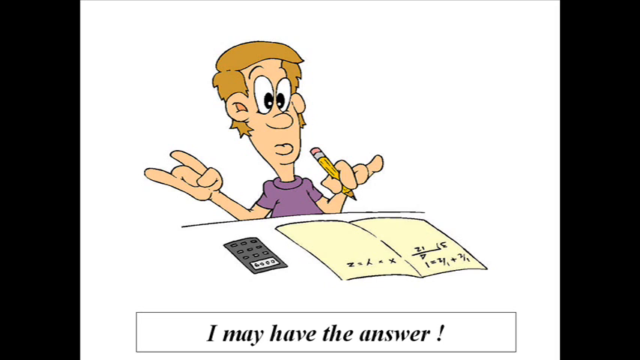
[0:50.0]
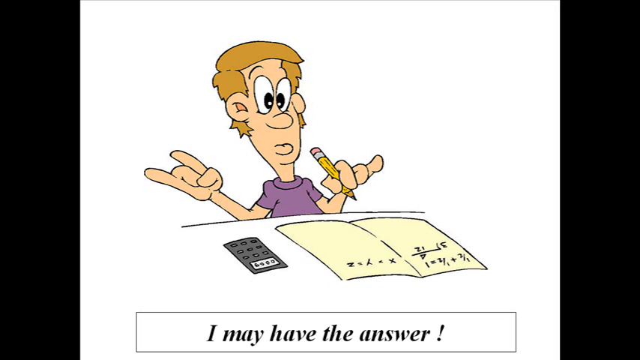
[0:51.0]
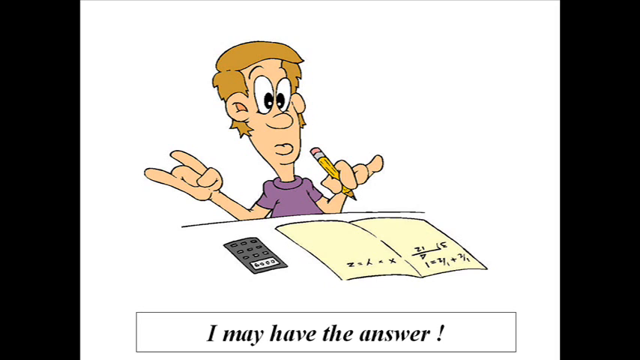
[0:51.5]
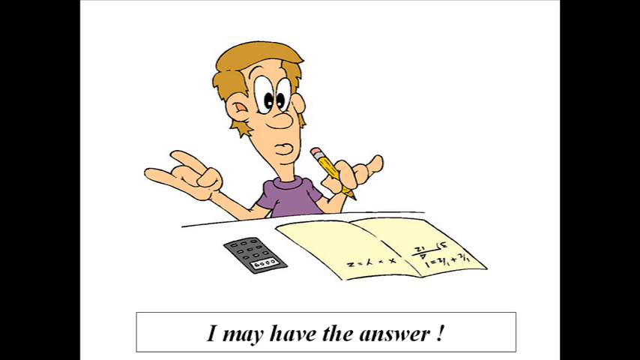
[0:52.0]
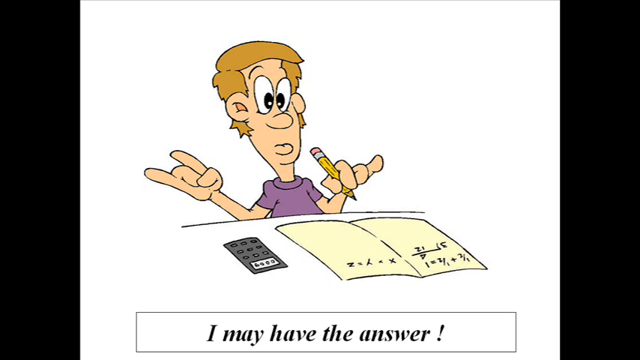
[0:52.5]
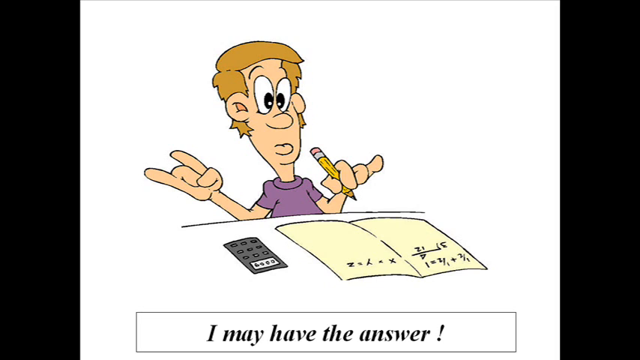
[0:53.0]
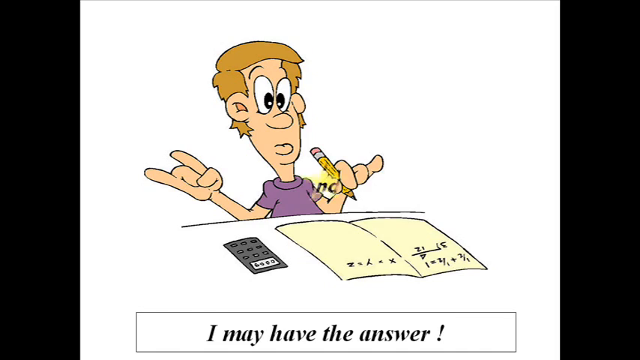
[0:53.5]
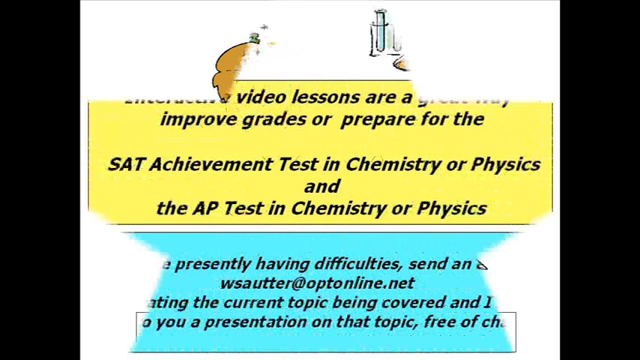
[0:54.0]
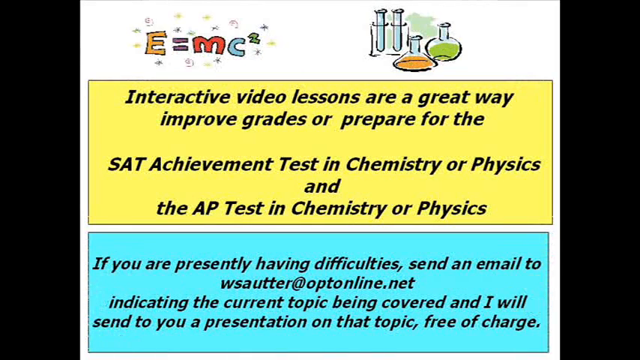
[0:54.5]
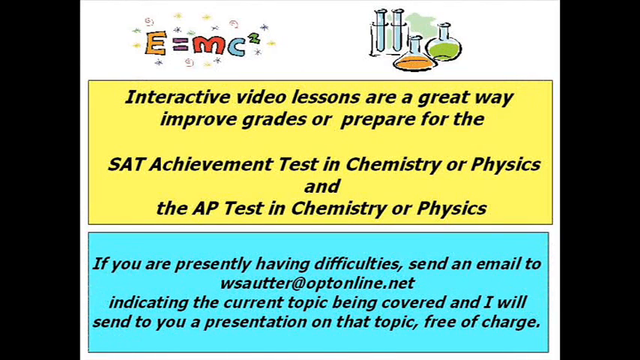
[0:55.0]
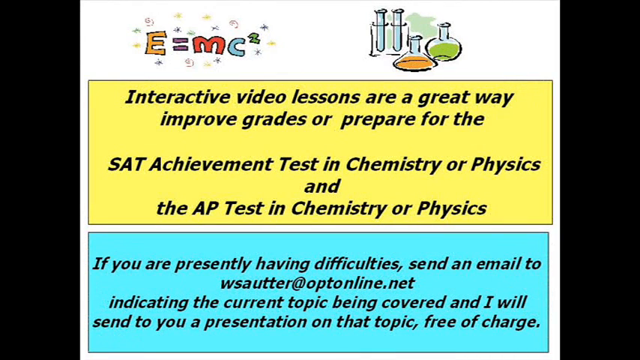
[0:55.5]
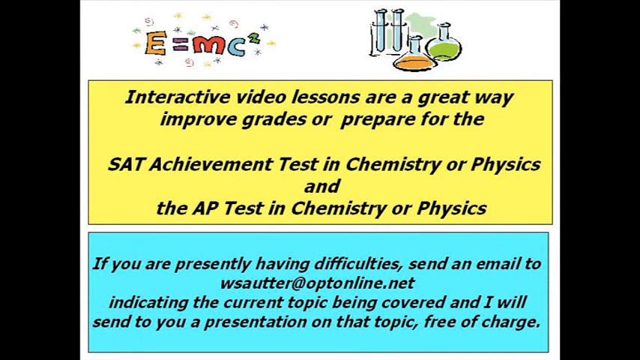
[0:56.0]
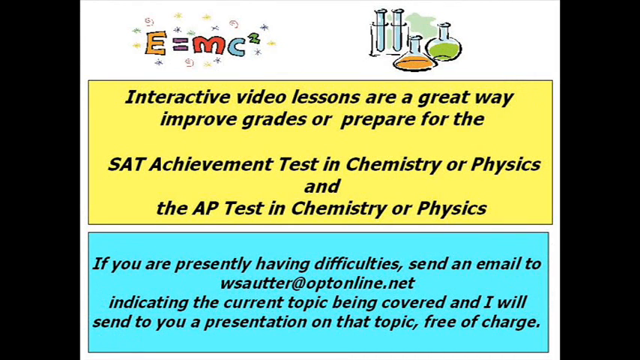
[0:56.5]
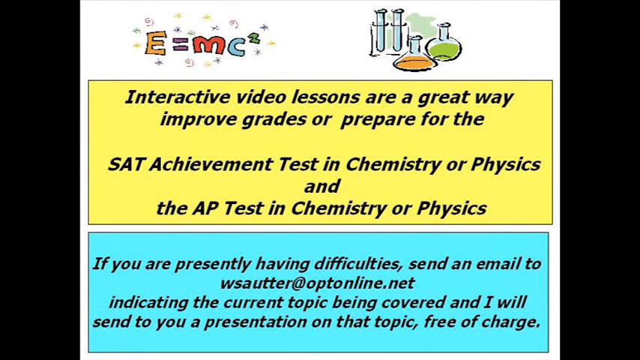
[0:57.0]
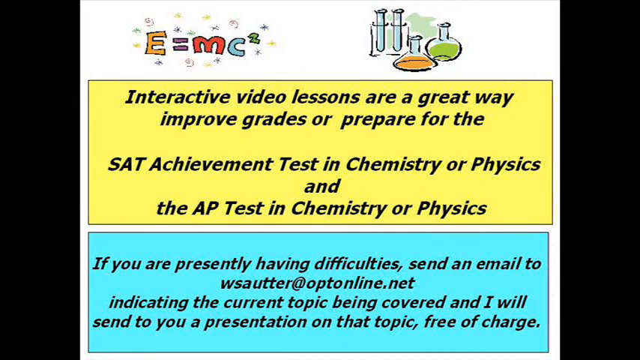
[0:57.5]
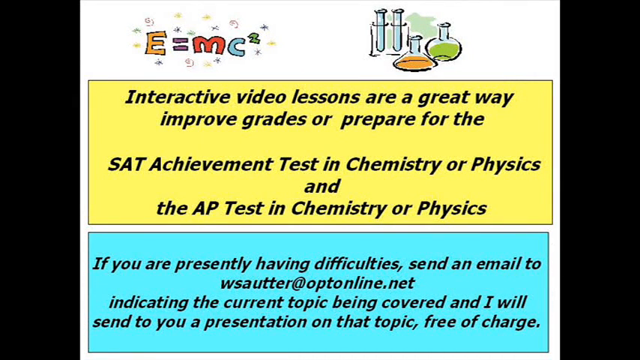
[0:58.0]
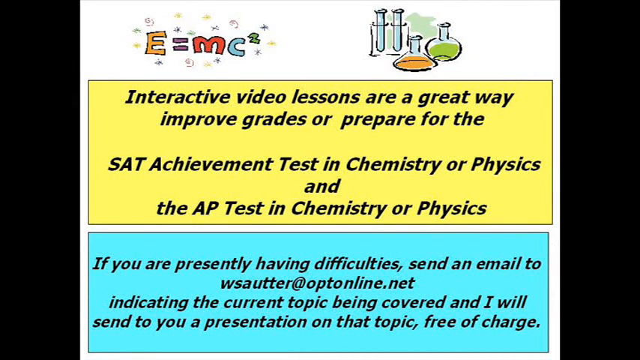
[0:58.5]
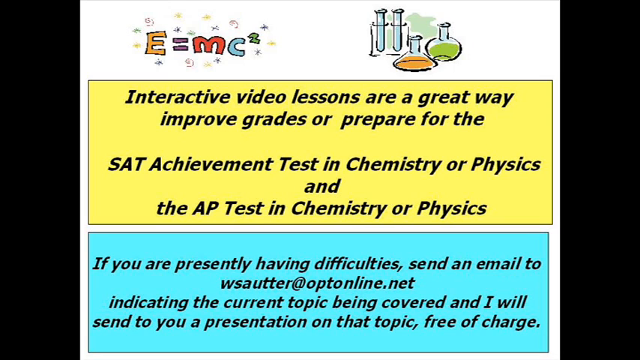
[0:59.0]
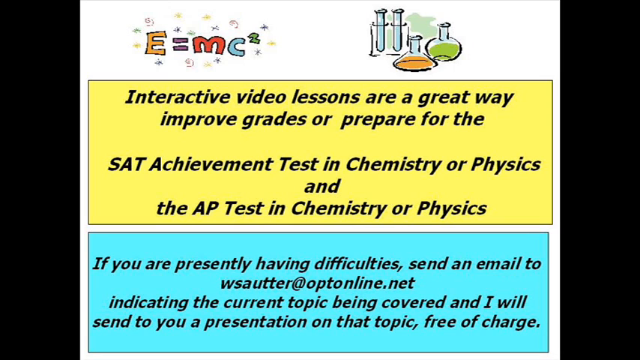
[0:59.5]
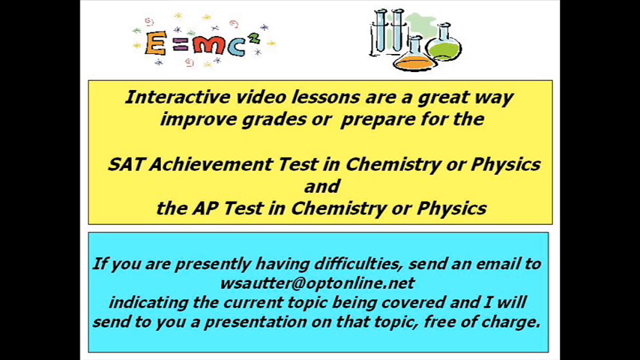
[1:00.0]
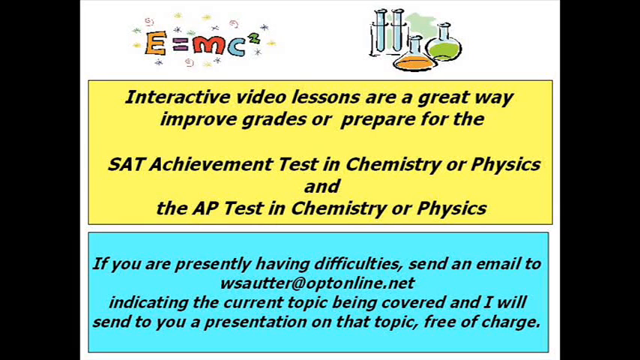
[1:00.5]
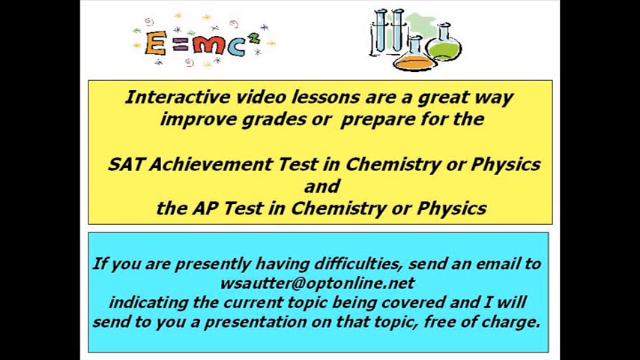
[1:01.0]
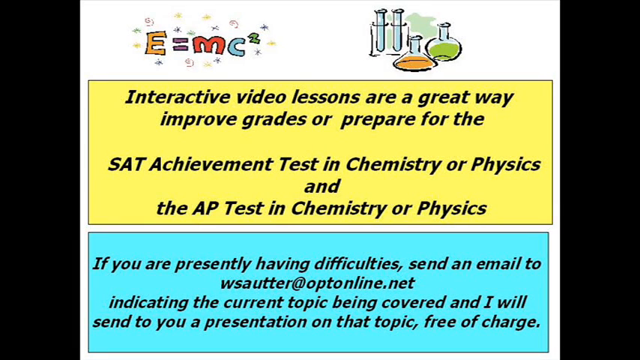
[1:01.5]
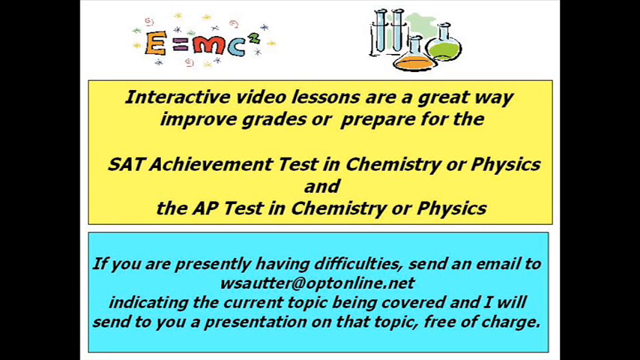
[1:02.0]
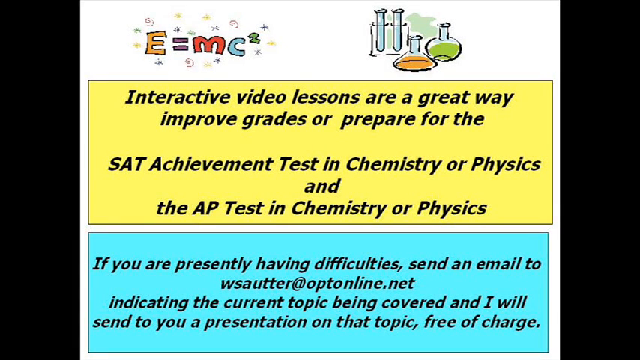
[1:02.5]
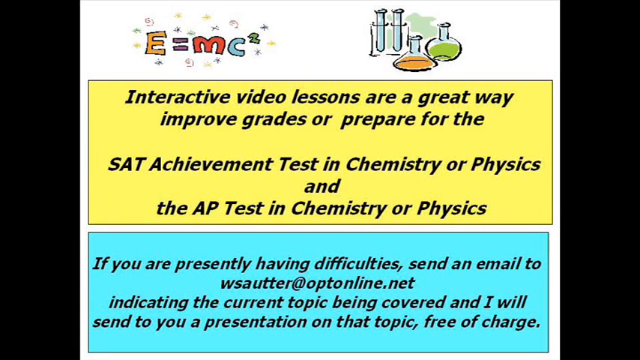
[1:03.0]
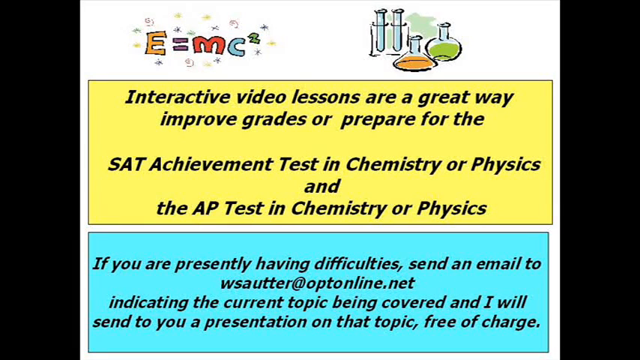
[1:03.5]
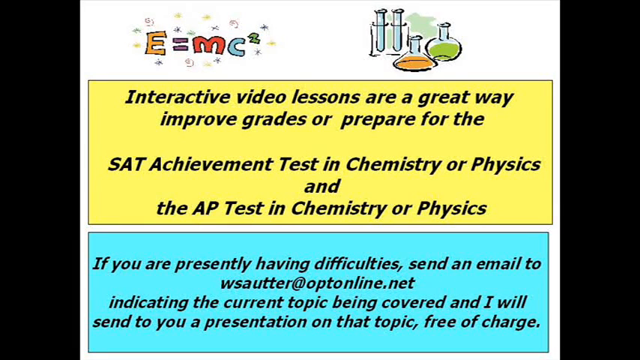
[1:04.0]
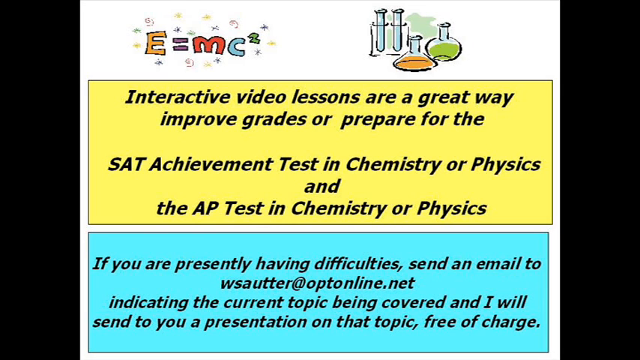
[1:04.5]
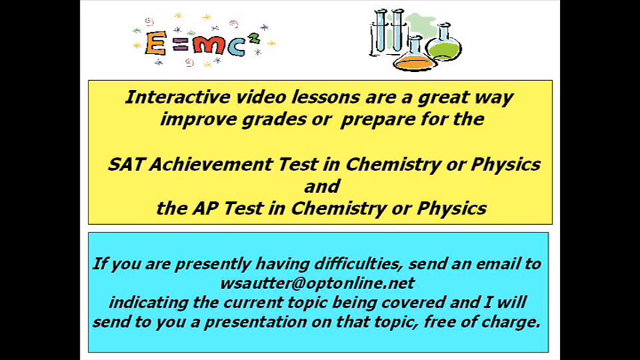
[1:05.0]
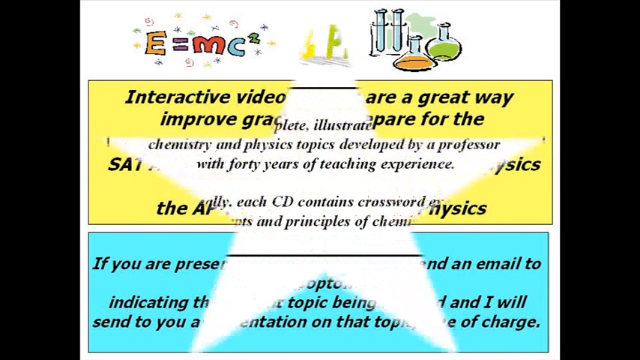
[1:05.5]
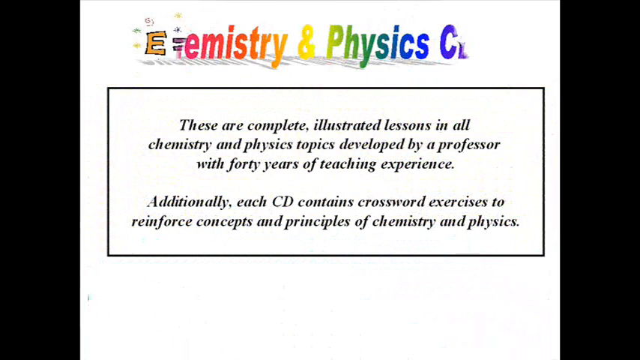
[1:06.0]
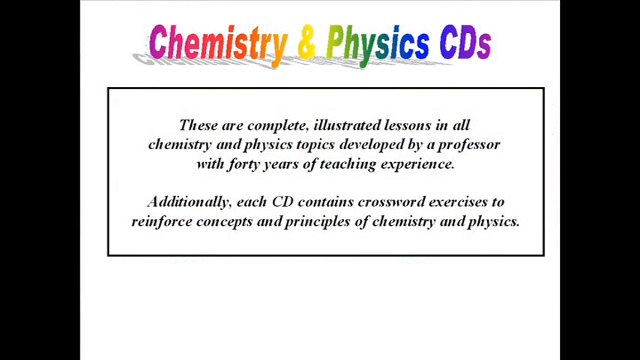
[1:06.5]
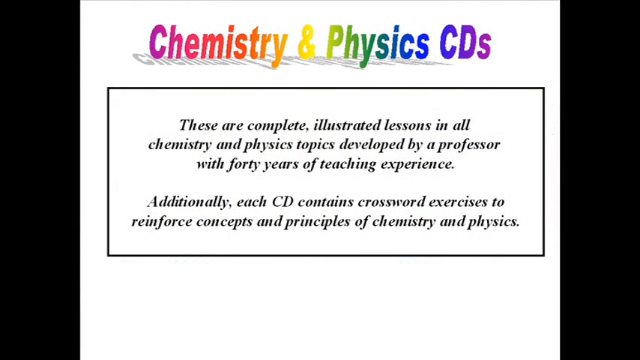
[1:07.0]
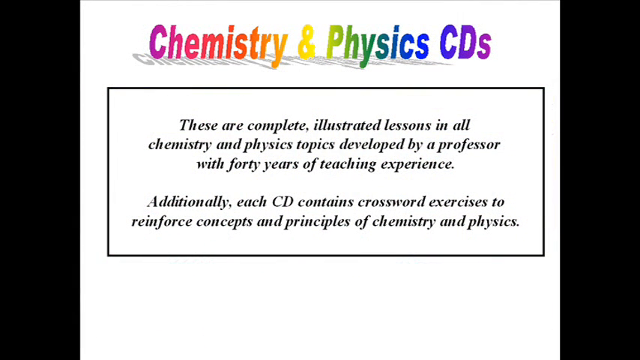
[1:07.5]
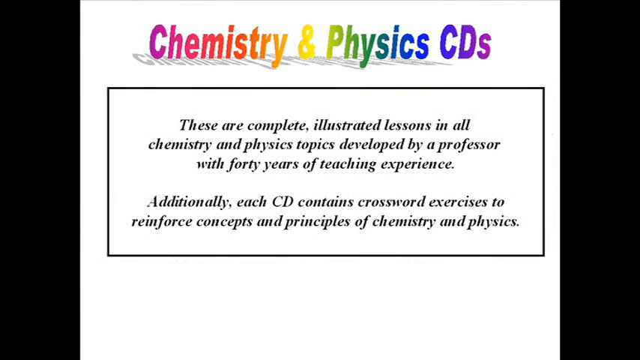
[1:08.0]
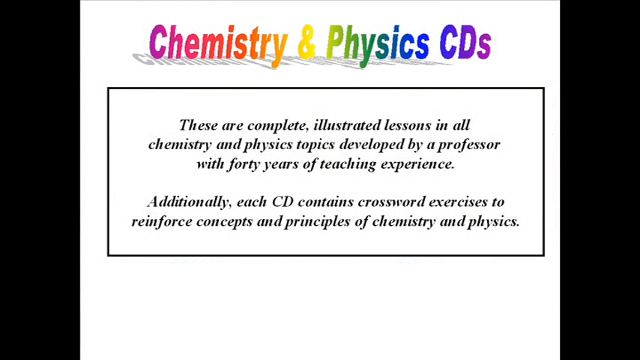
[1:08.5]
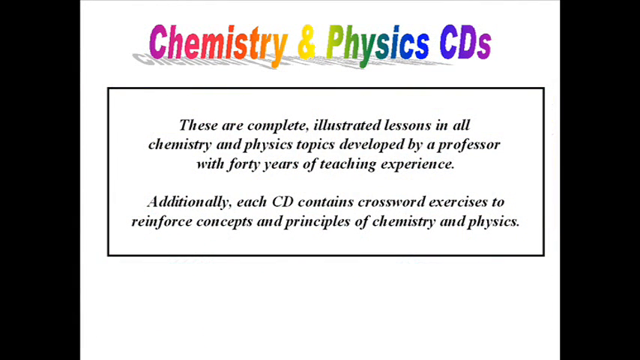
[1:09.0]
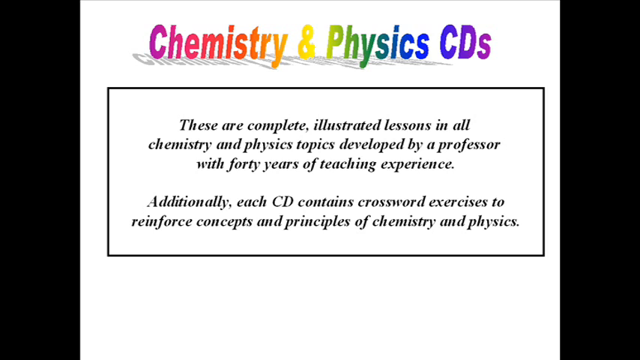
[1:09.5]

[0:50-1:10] The boy in the purple shirt with the pencil is still on screen until a star transition comes out of the screen and changes it to a white background with two text boxes. Above the text boxes, on the top left, is "E equals MC squared" in a colorful, drawn-style image with sparkles around it. Beside it are drawn-style lab glasses holding liquids, one green and one orange, along with some scientific tubes. Below are a yellow box and a blue box. The top box states that interactive video lessons are a great way to improve grades or prepare for the tests, and the bottom one shows a contact email for anyone having difficulties. The star transition appears again, revealing a text box in the center stating that these are complete illustrated lessons in all chemistry and physics topics. At the top of the screen, the text "Chemistry and physics CDs" appears with a rainbow gradient running through it.